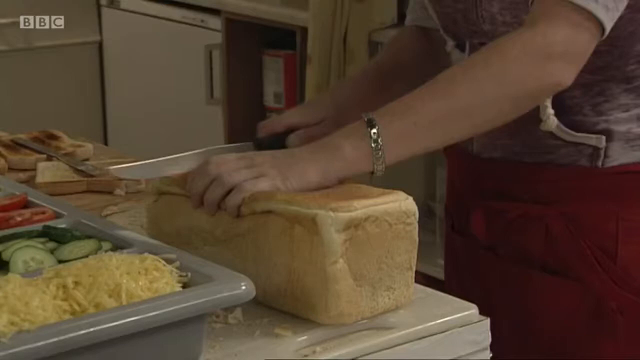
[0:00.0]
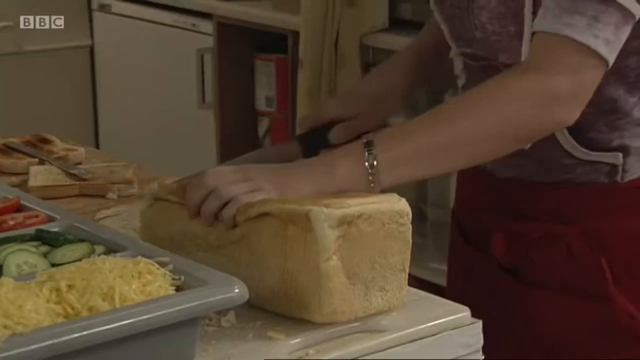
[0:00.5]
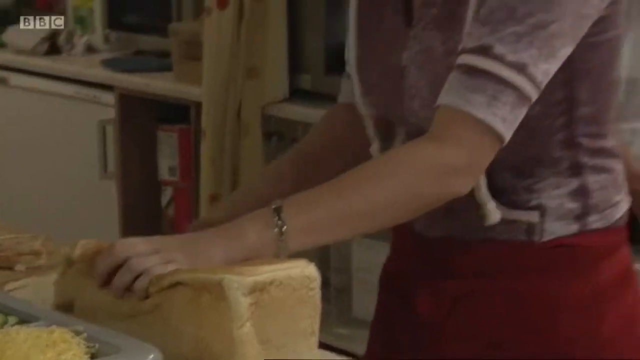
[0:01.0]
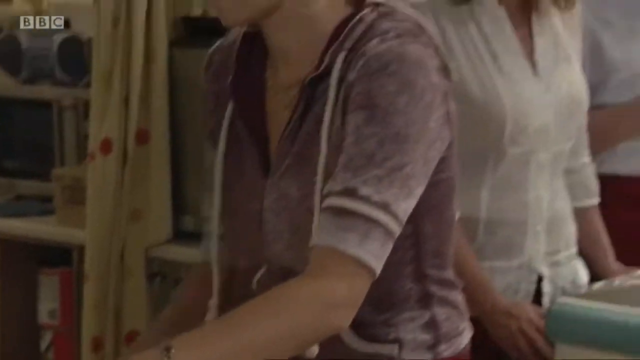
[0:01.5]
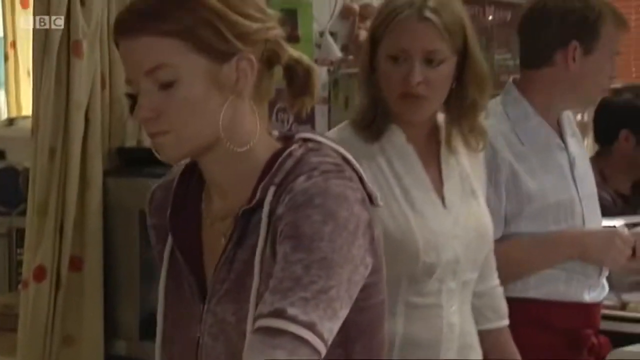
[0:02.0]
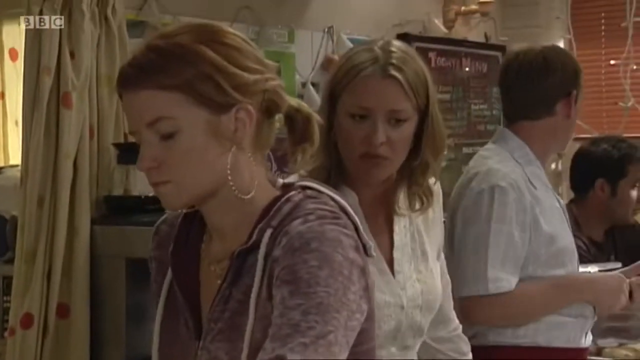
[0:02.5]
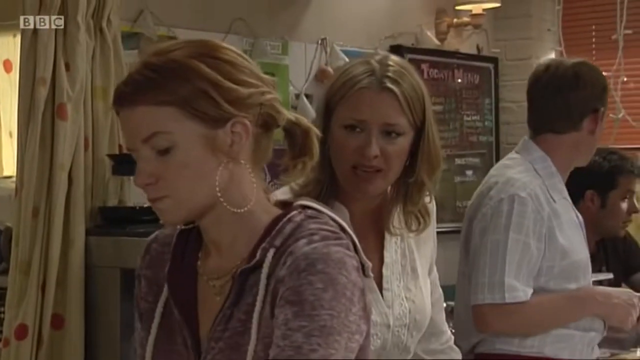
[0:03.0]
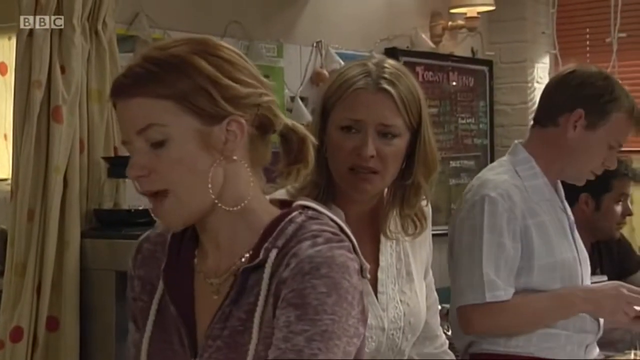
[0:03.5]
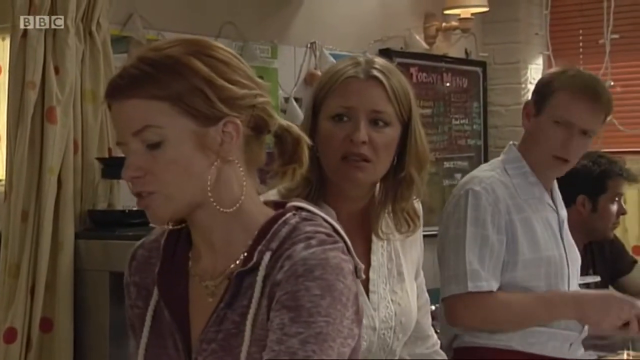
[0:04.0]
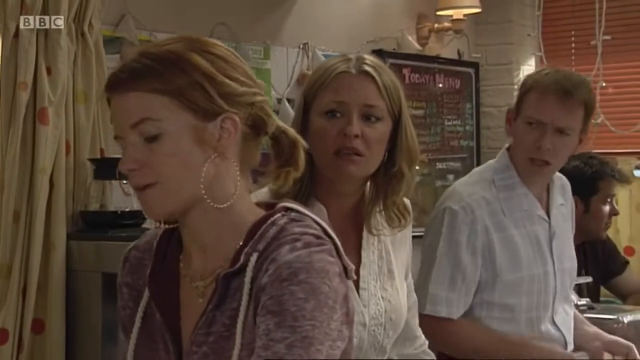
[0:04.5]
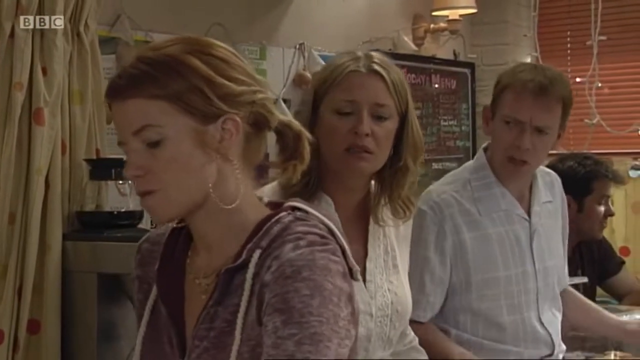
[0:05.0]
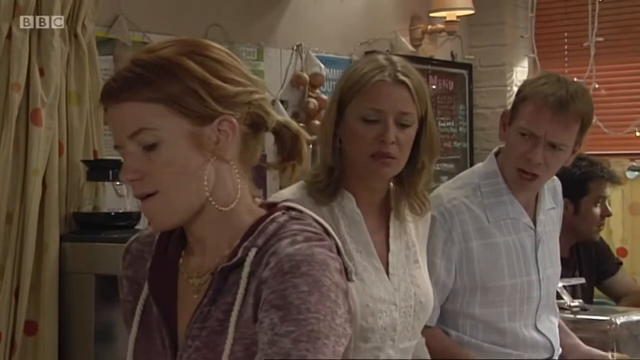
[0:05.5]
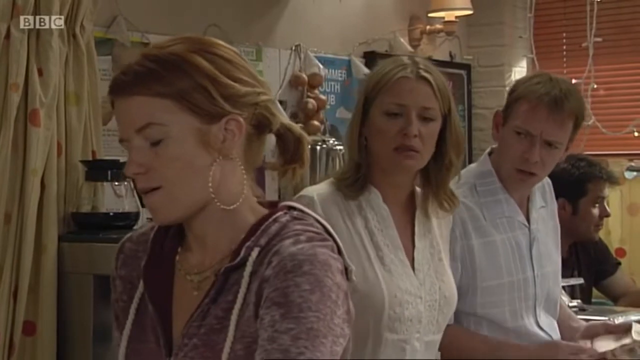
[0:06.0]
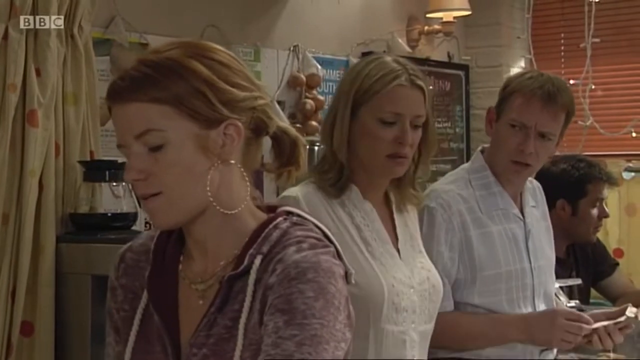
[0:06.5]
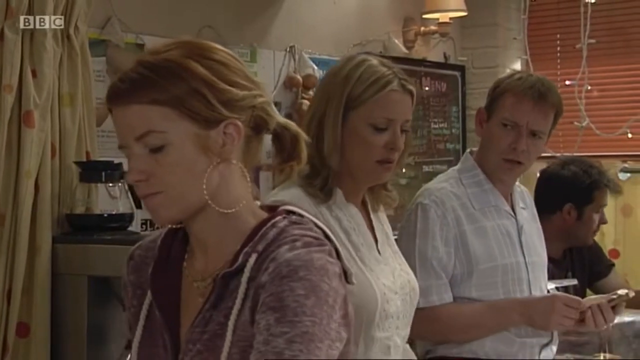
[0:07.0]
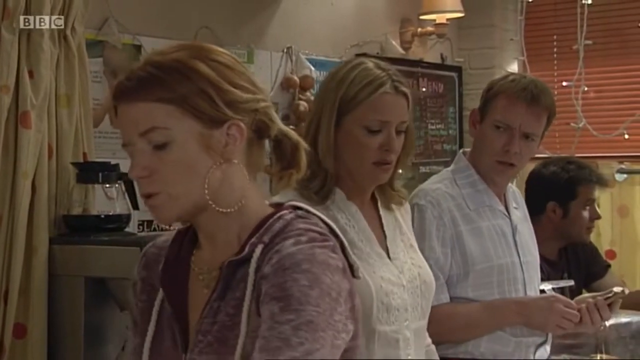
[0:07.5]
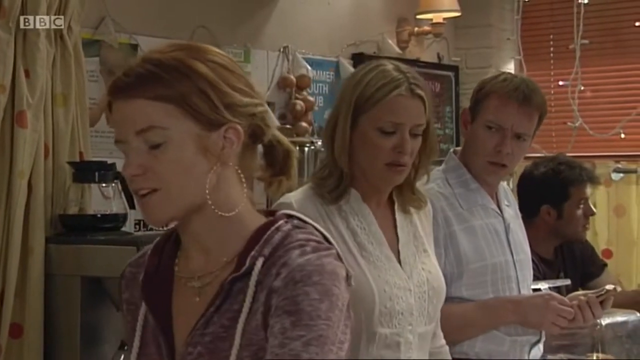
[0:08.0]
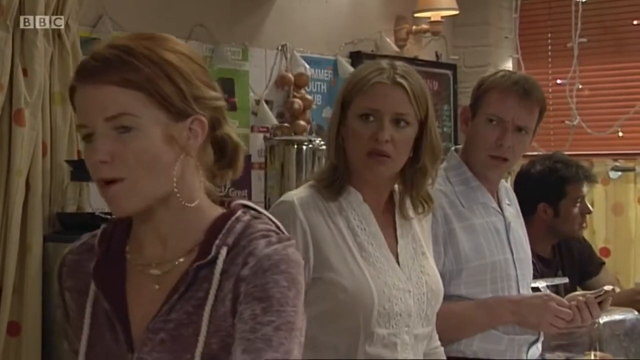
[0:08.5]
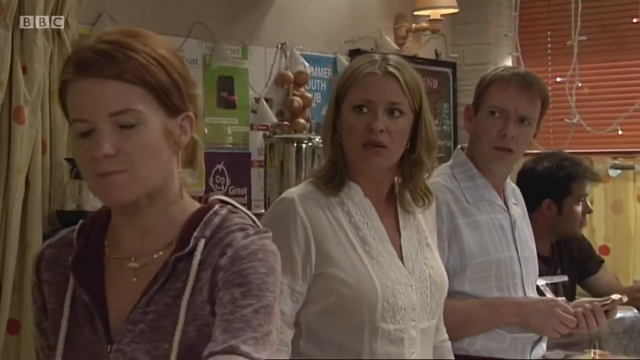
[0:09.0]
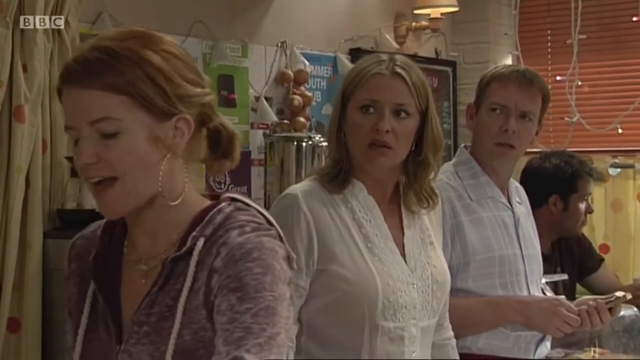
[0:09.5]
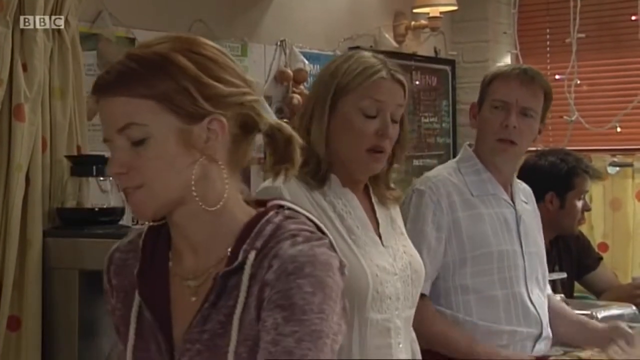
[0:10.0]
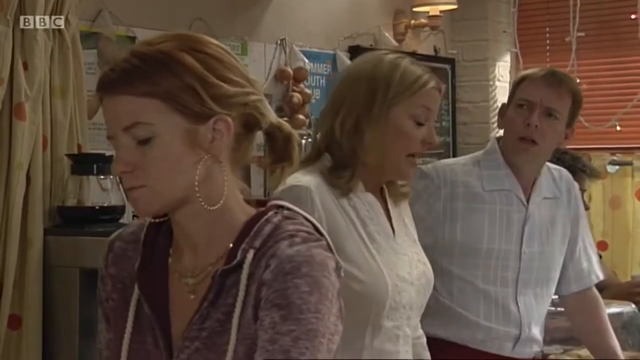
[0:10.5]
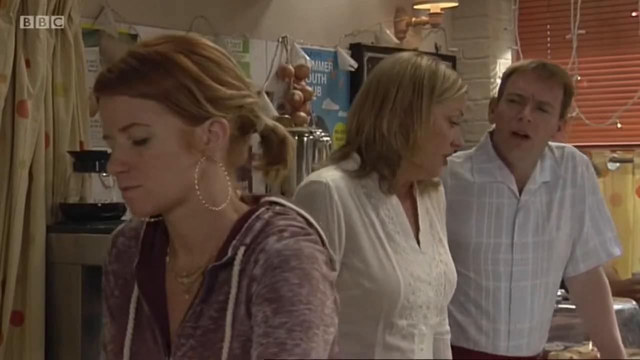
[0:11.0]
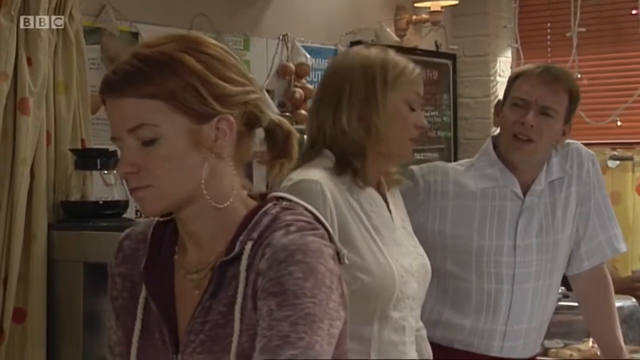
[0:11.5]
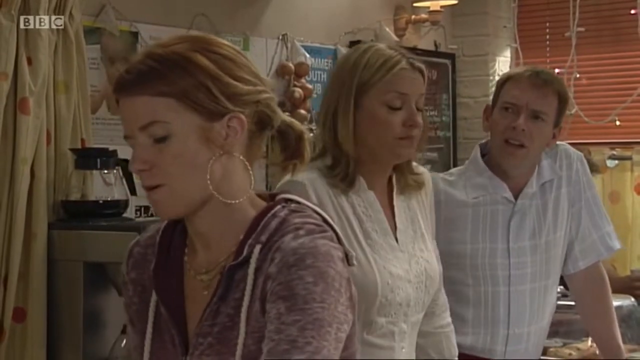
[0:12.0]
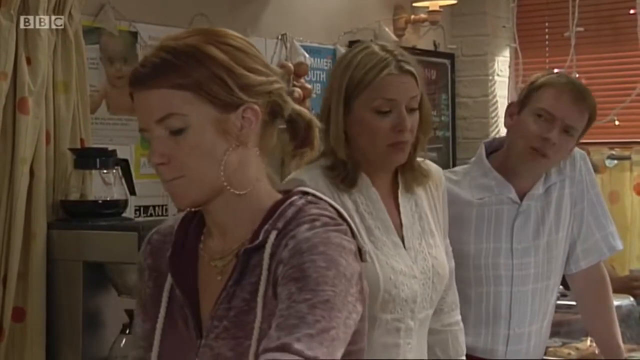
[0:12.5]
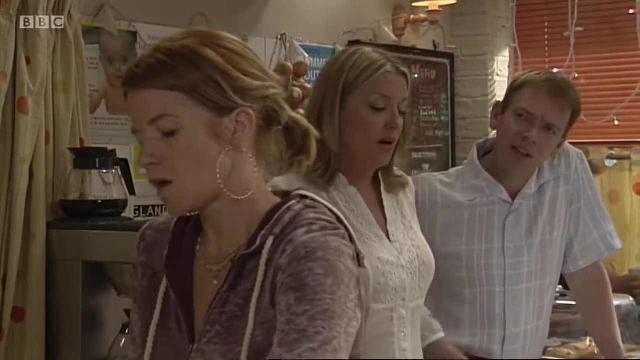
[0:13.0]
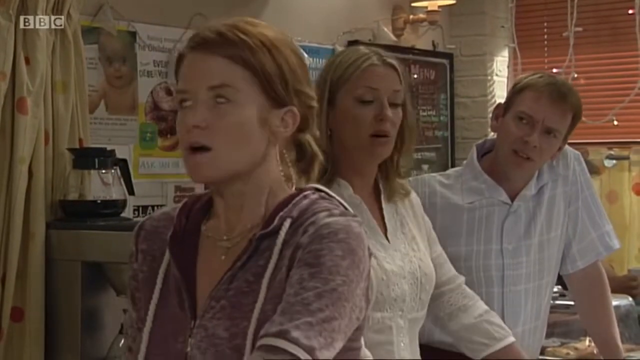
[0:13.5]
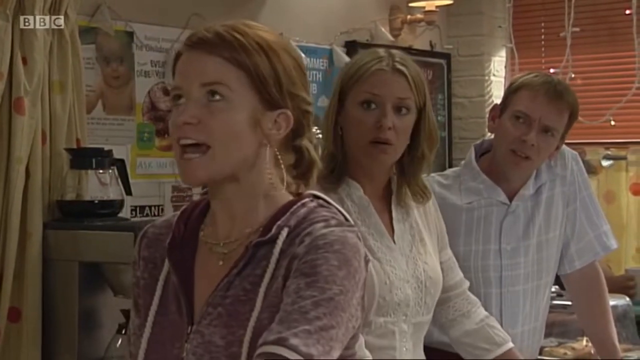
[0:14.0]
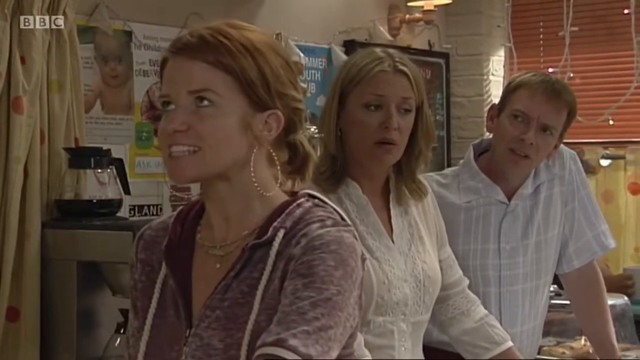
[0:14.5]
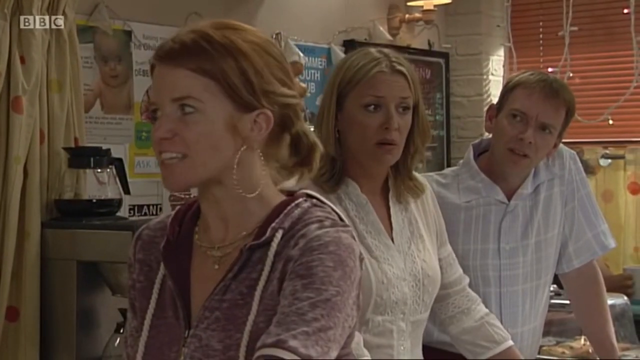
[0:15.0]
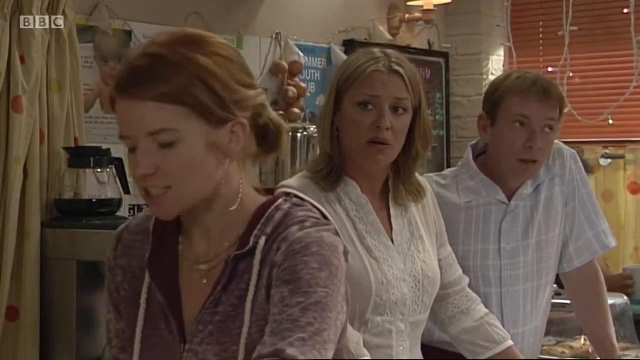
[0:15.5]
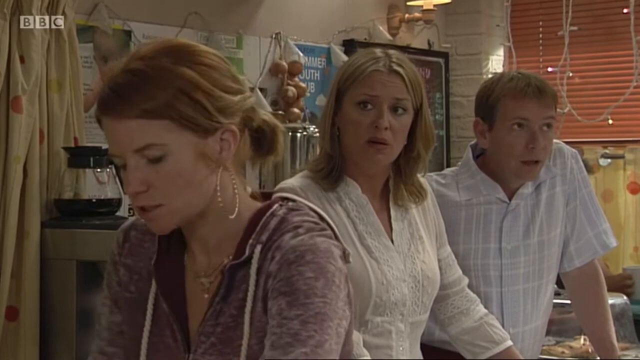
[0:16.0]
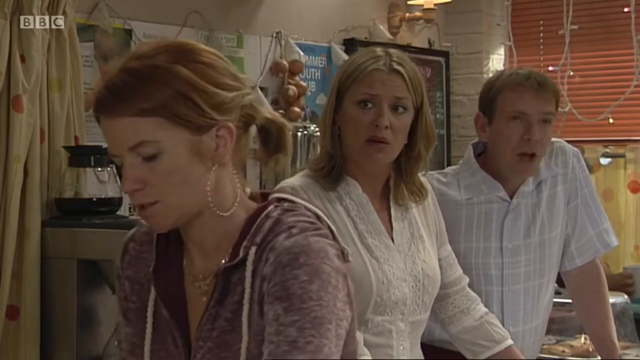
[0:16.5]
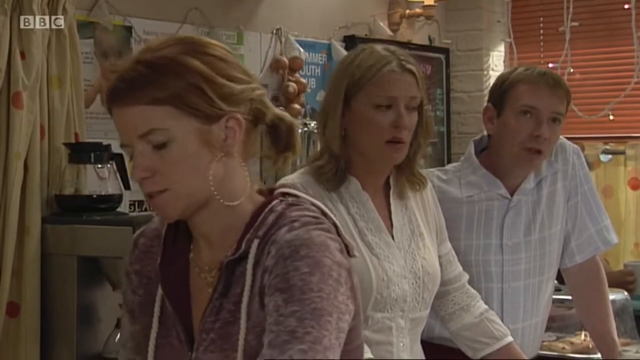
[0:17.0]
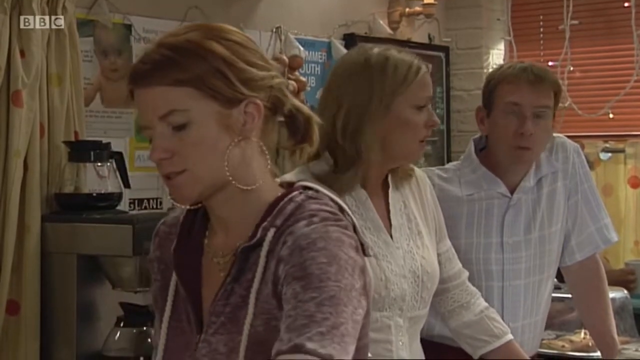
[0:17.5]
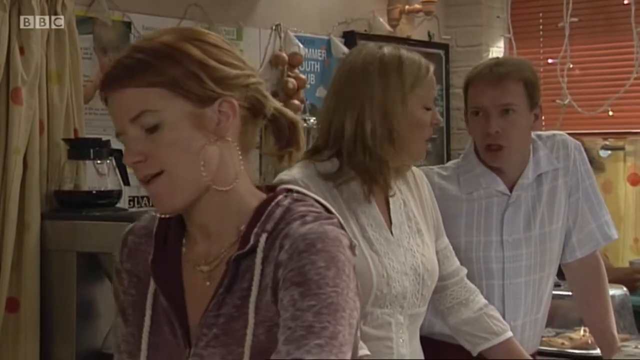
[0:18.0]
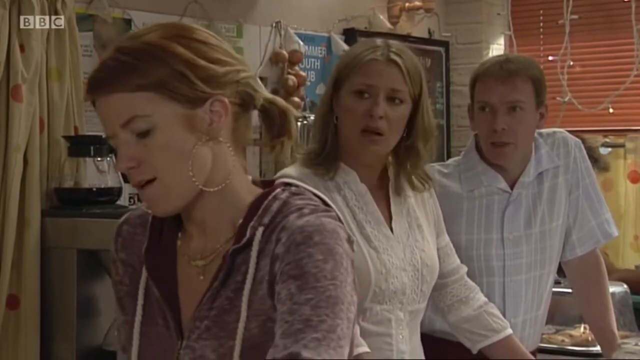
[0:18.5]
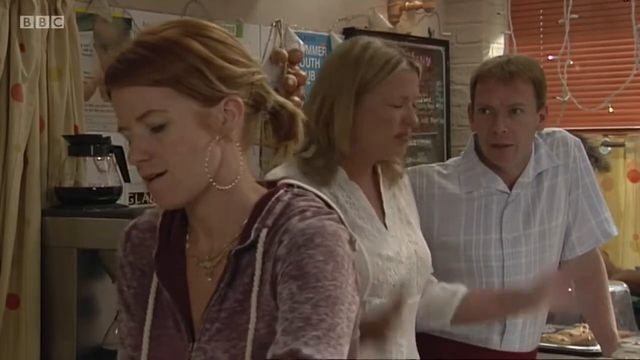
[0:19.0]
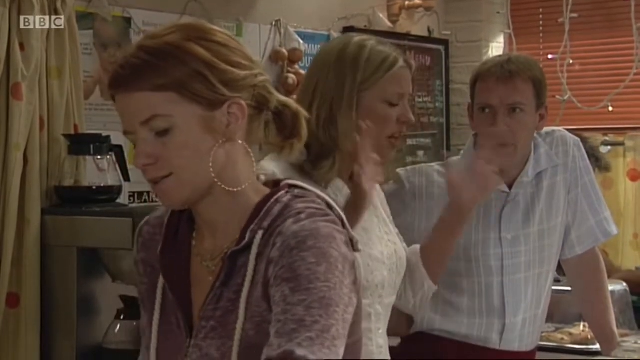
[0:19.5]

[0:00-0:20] A BBC logo appears in the top left as the video begins. In a kitchen, a woman is slicing bread, with other food items on a tray. At the back, another woman is talking to the woman slicing the bread, and they are all talking with a man. The background has posters, lights, other items hanging, a carton and a menu written at the back. The woman slicing the bread wears a grey sweater and a red apron and talks angrily to the man and woman at the back. The man is operating a phone, and it looks like they are arguing with her. At one point she stops slicing the bread, looks up and yells or shouts.